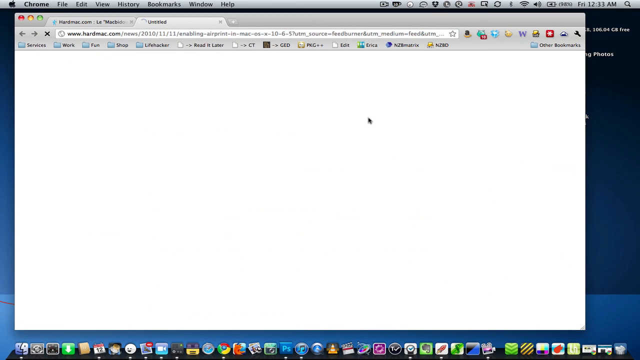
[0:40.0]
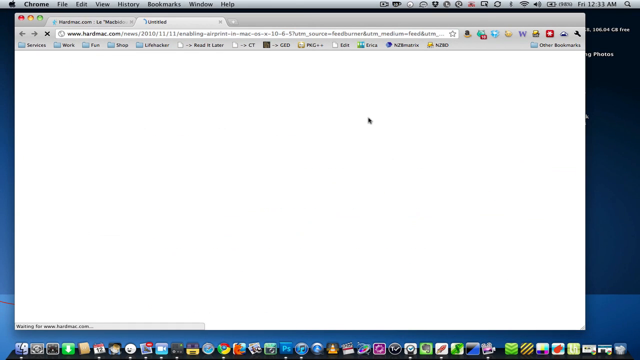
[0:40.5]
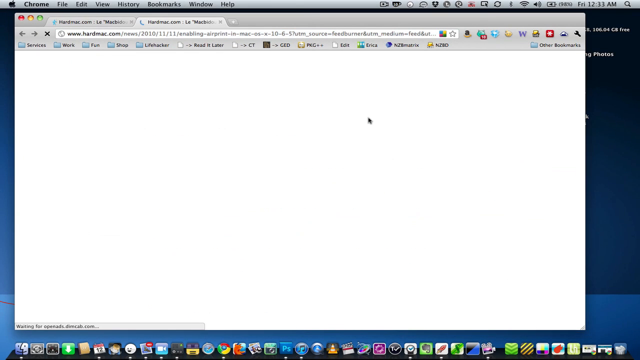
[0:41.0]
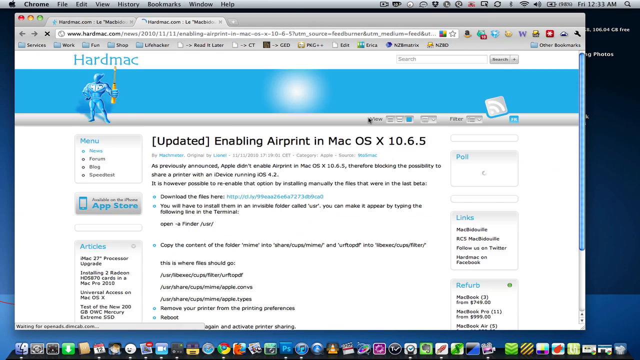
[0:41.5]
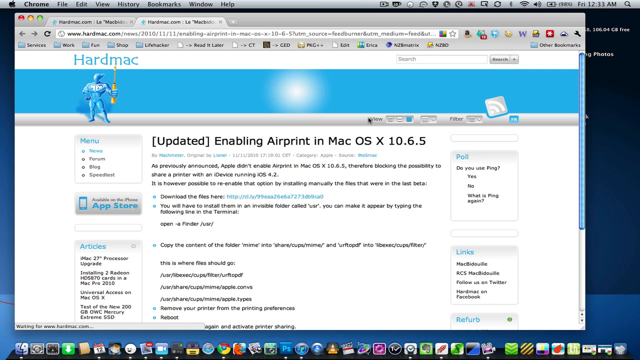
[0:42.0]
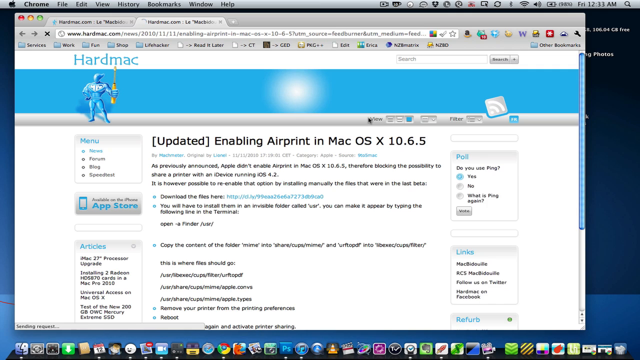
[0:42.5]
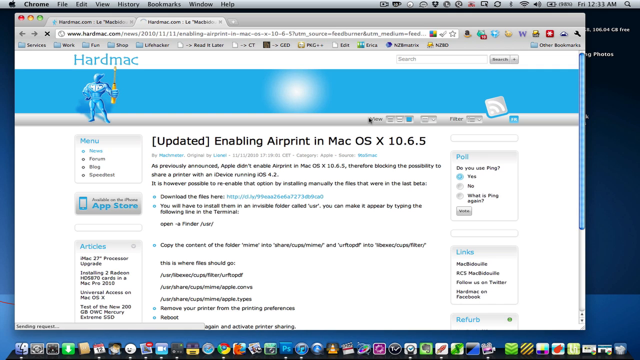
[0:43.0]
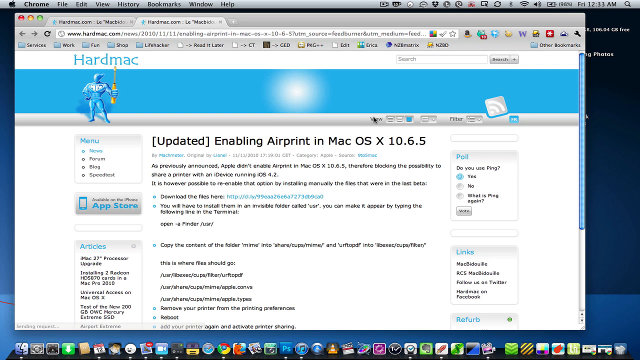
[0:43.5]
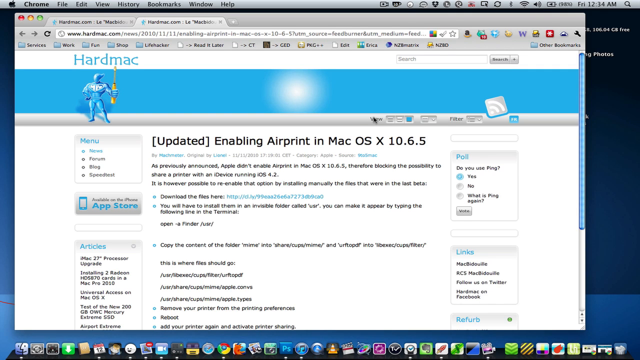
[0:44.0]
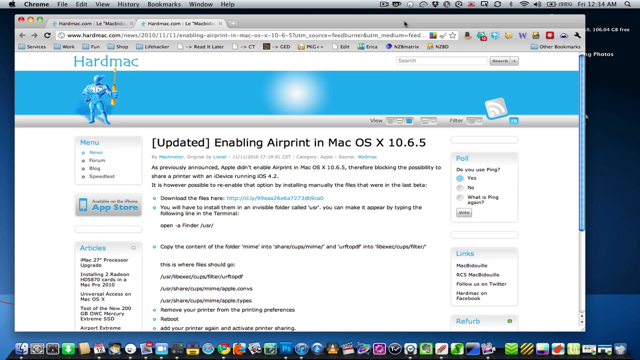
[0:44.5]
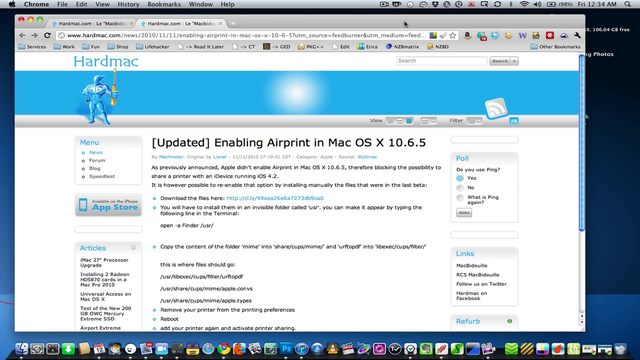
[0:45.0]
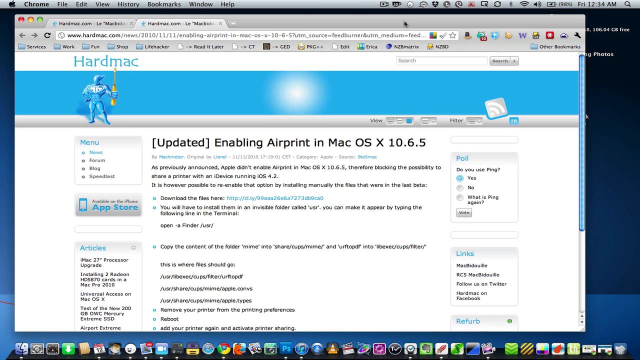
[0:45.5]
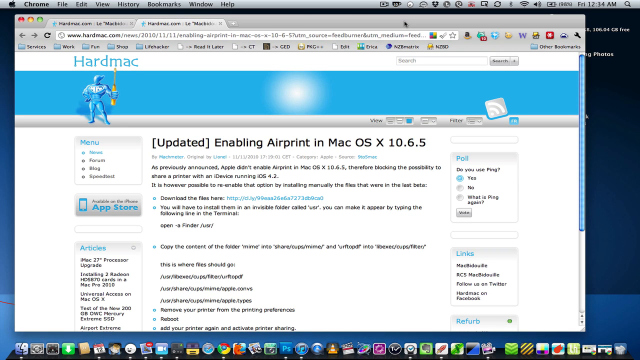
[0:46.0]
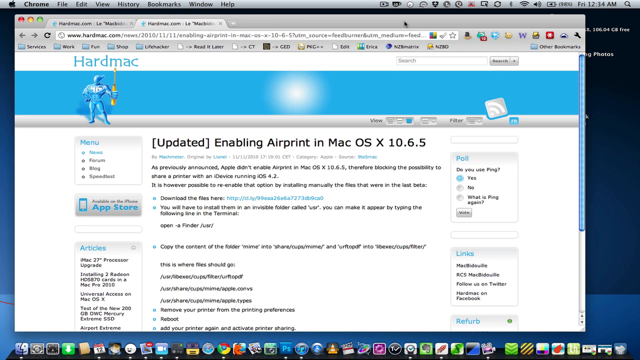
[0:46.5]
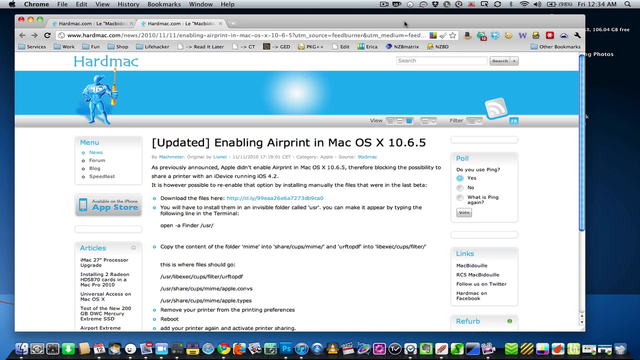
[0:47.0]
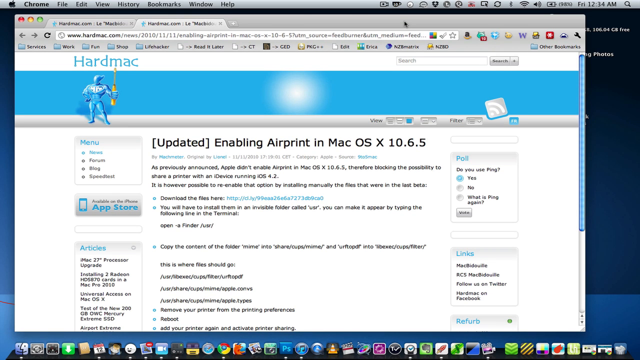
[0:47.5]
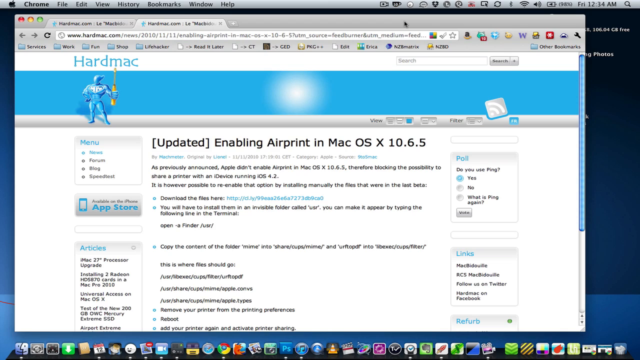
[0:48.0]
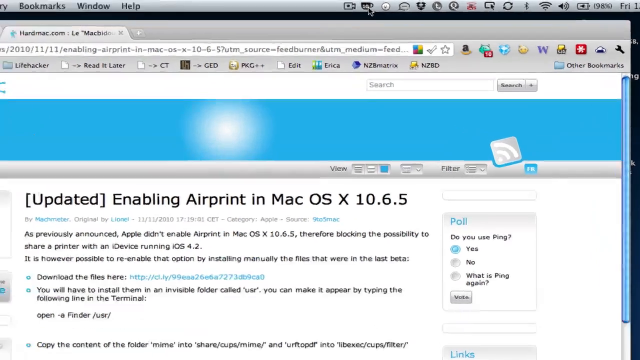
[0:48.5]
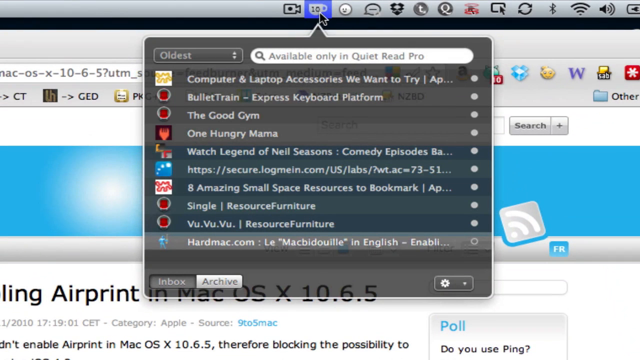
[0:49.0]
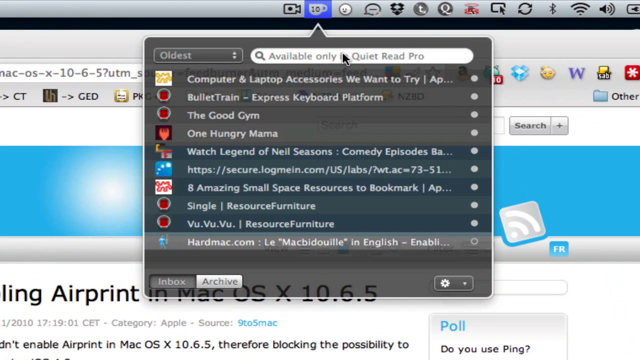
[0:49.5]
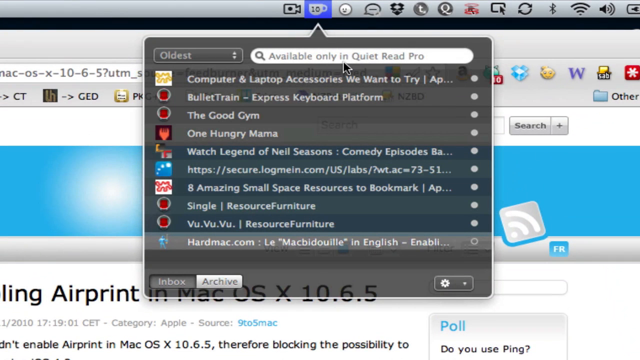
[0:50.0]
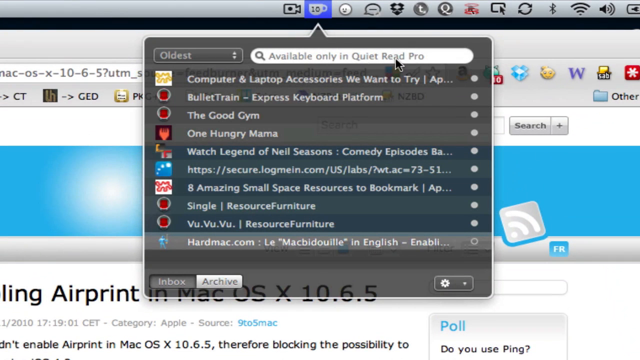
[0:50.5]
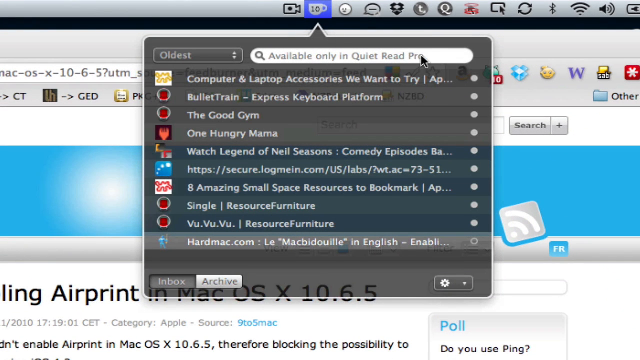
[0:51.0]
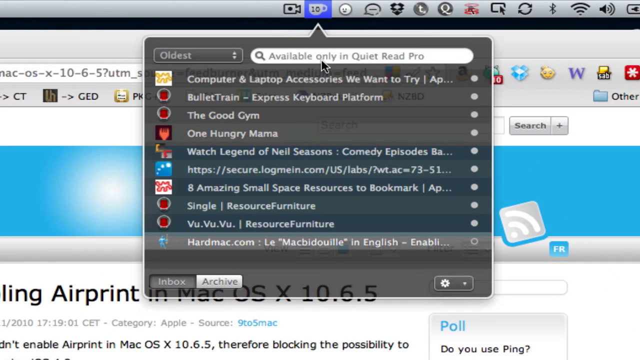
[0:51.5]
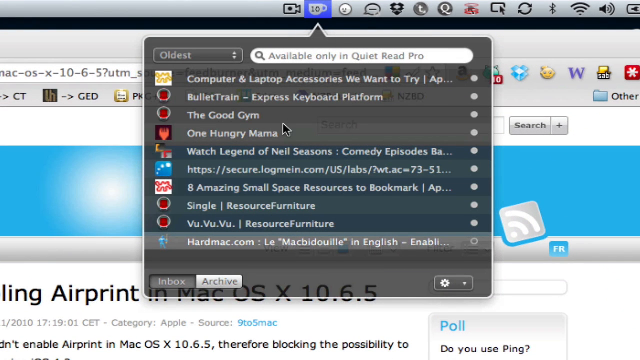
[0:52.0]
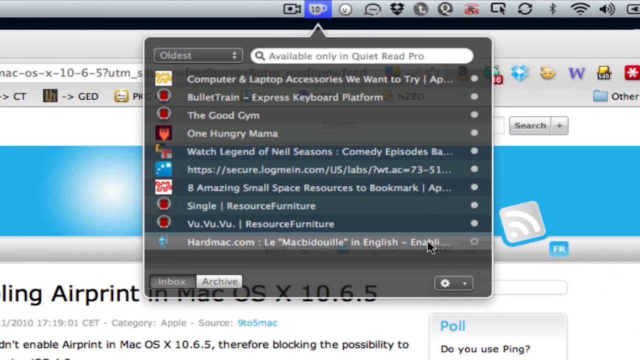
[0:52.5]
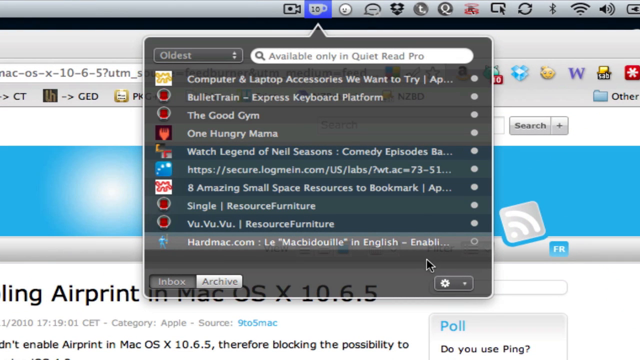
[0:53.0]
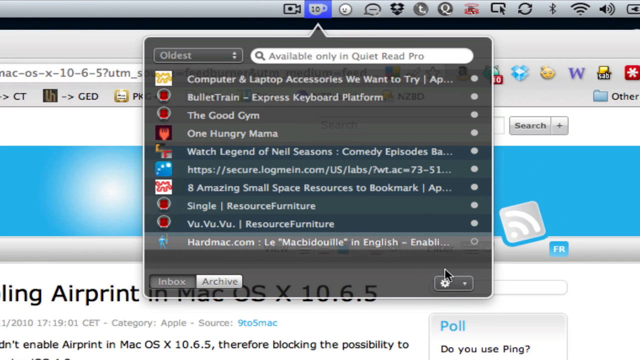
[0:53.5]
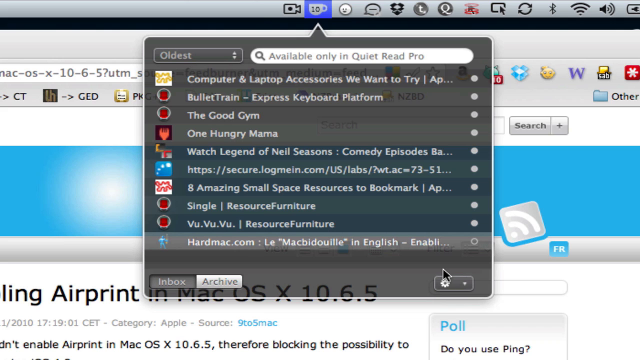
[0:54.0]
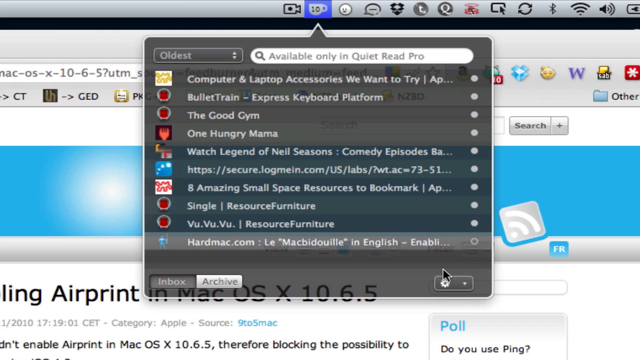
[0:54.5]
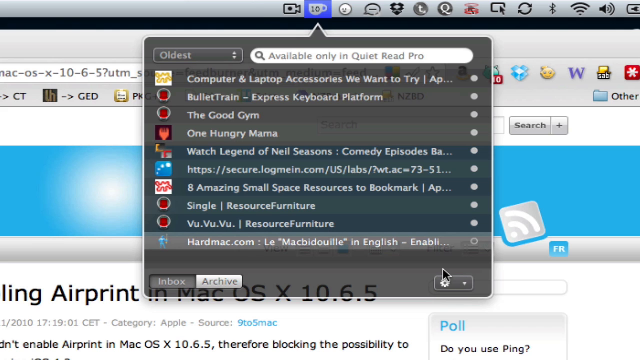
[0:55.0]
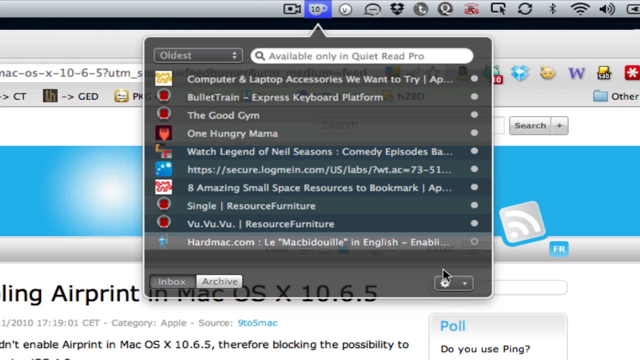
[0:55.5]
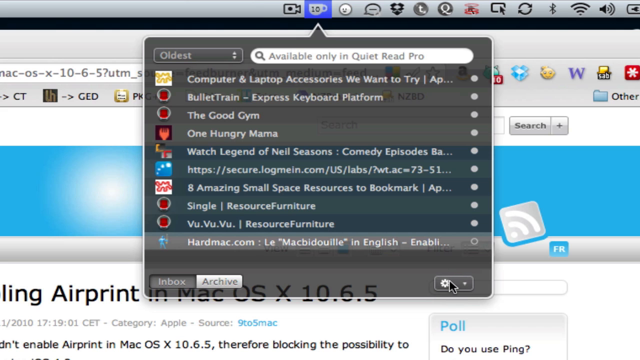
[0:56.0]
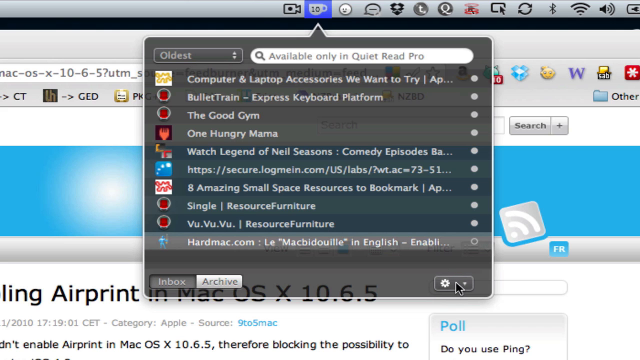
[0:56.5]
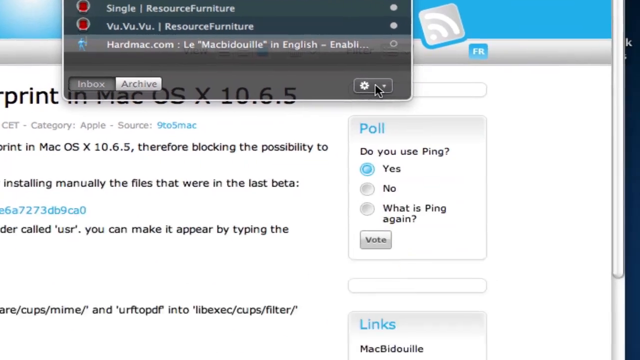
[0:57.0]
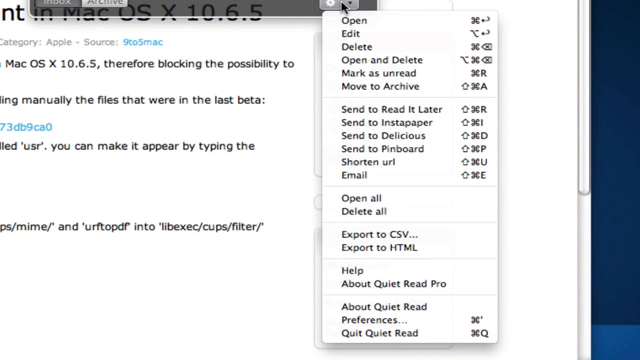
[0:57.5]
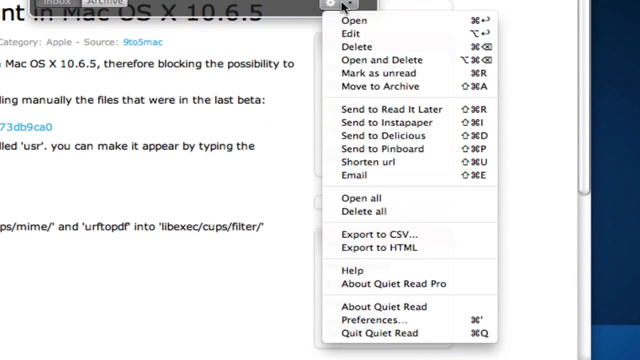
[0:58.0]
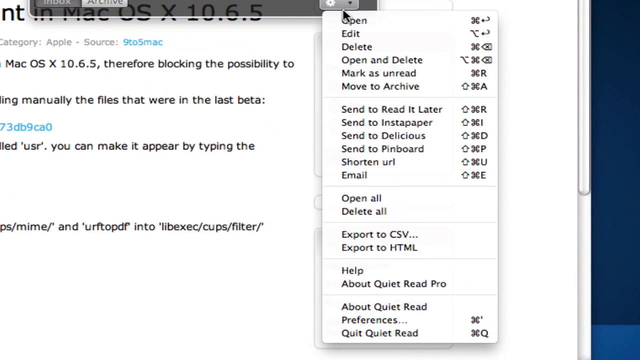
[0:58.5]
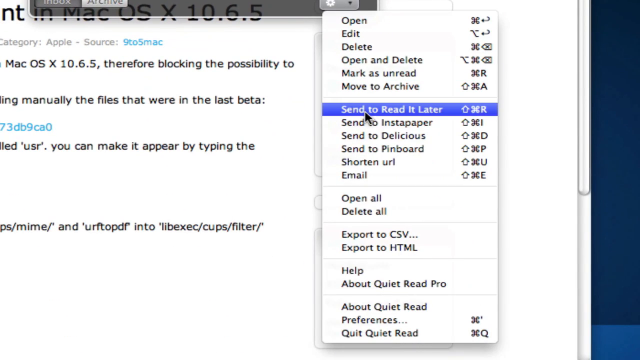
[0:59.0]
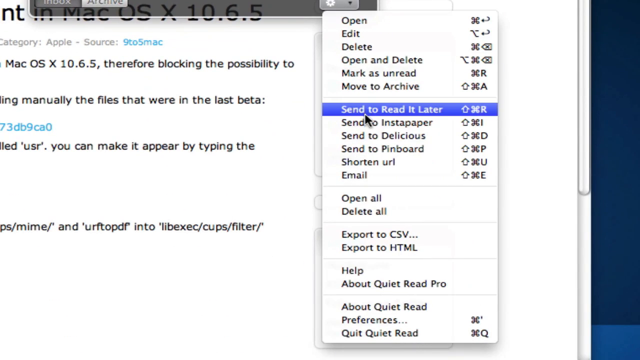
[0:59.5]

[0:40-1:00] The computer screen shows the hard Mac page, with text reading "Enabling AirPrint and Mac operating systems". The pointer clicks on the cup, and "Available only in QuietRead Pro" appears, along with a list of 10 things. The pointer then clicks on what looks like a gear shift, and an option reads "send to delicious". The pointer also goes to click on the coffee cup at the top.